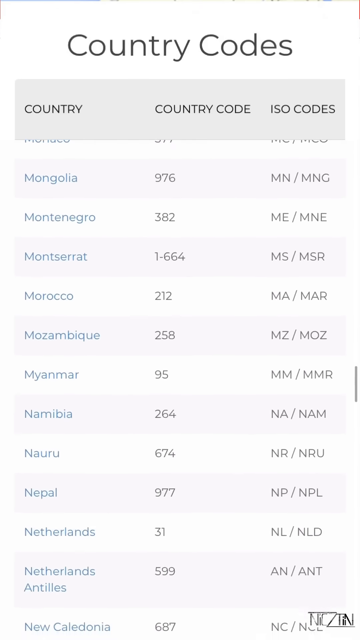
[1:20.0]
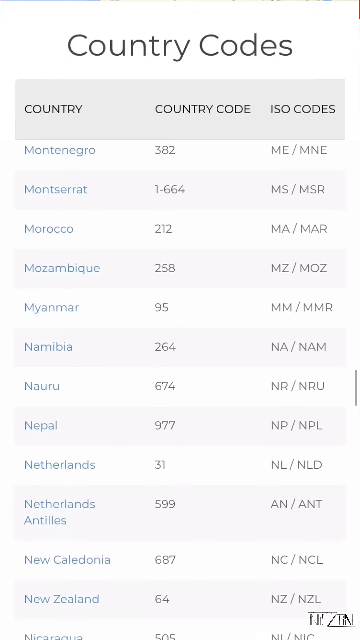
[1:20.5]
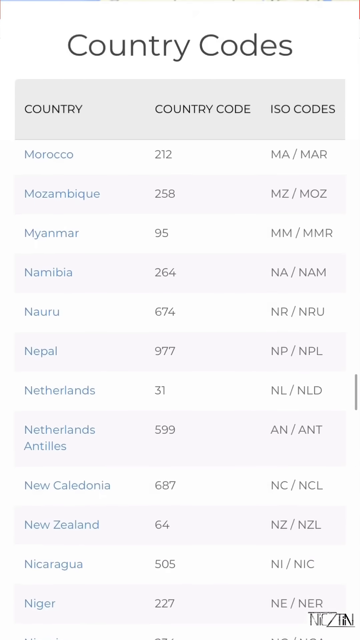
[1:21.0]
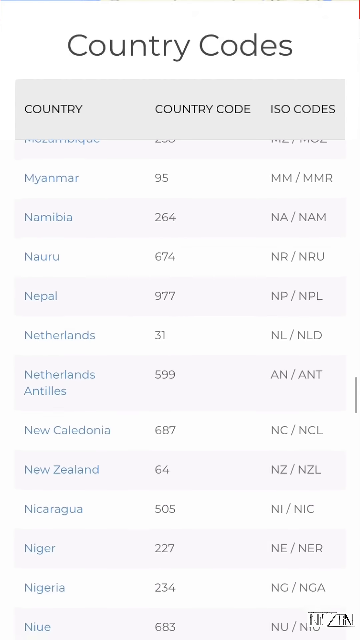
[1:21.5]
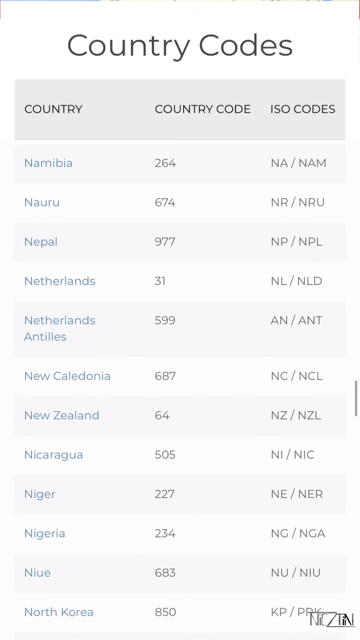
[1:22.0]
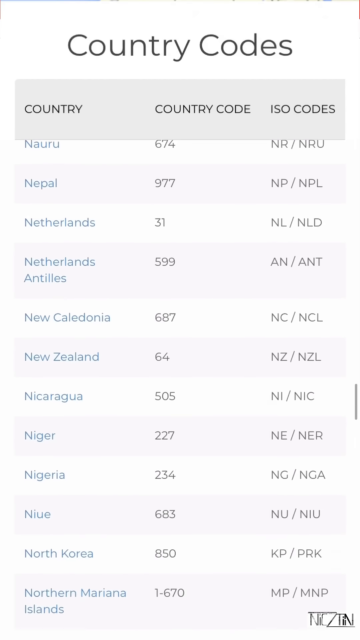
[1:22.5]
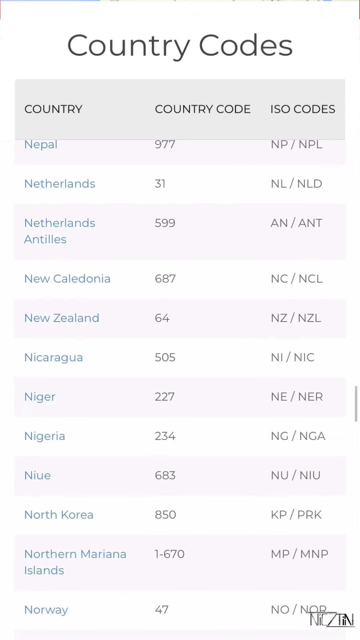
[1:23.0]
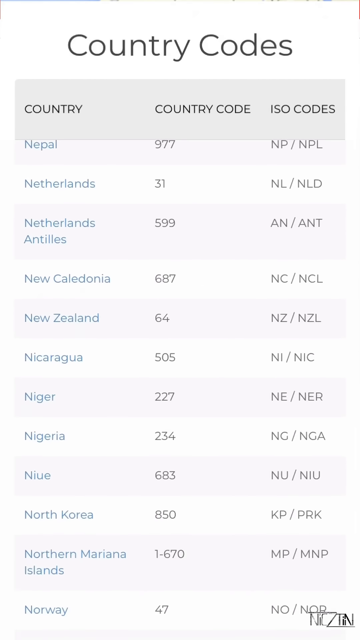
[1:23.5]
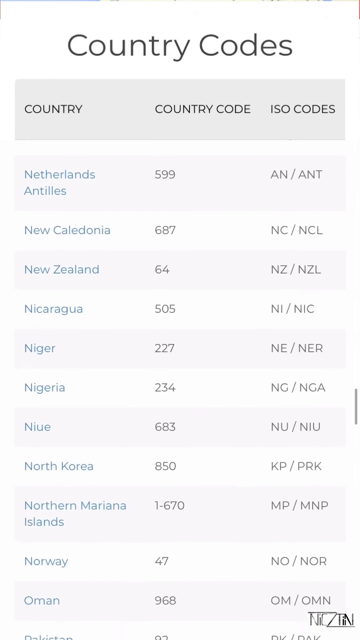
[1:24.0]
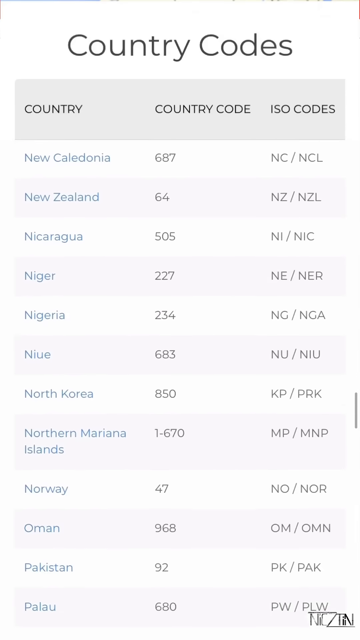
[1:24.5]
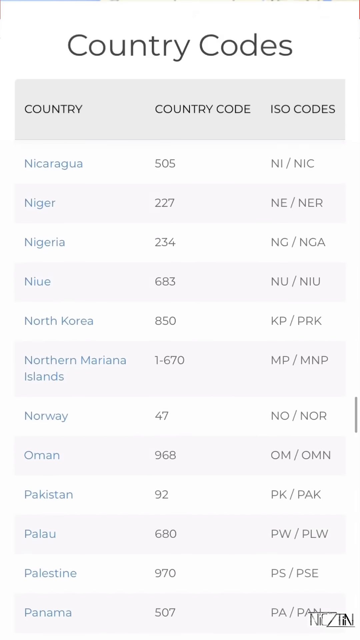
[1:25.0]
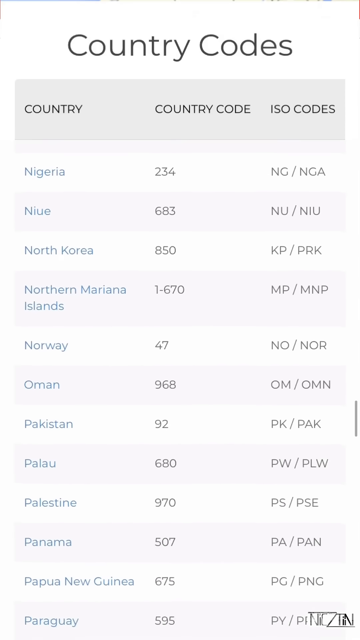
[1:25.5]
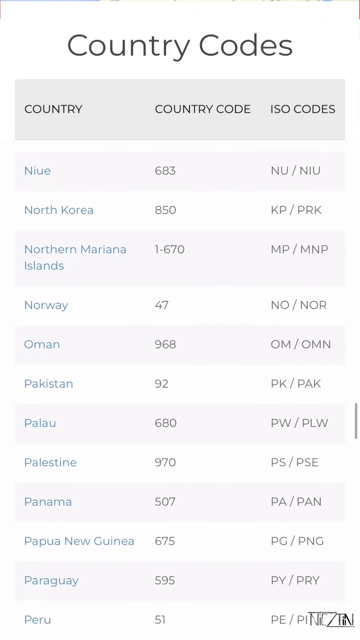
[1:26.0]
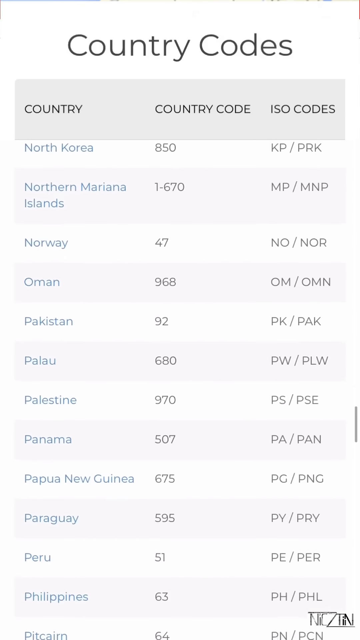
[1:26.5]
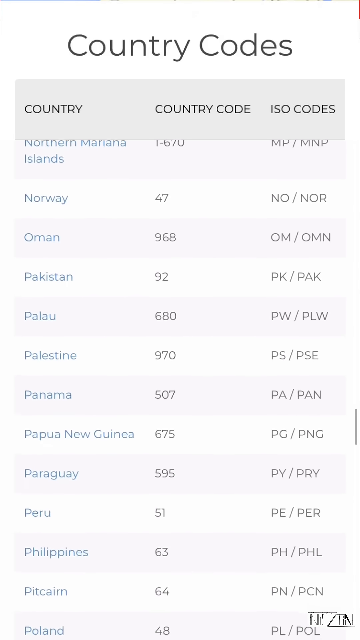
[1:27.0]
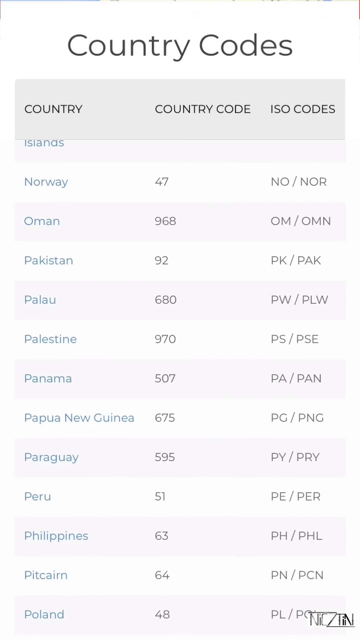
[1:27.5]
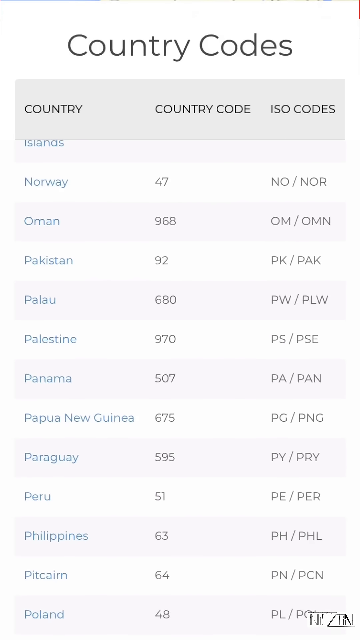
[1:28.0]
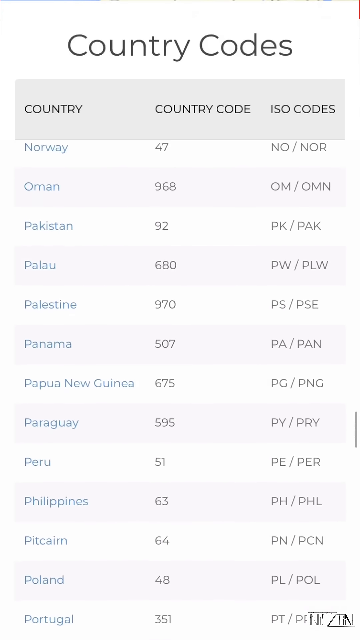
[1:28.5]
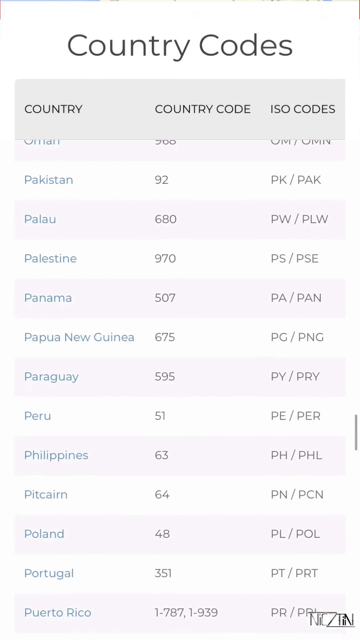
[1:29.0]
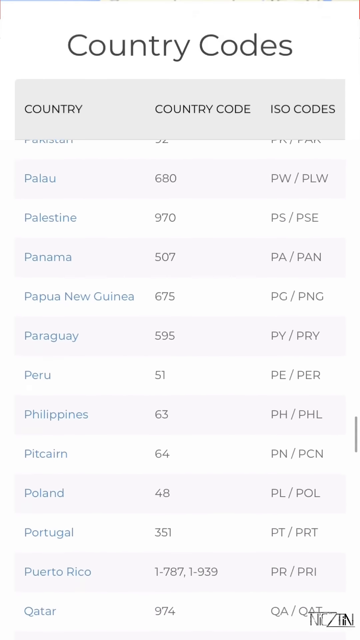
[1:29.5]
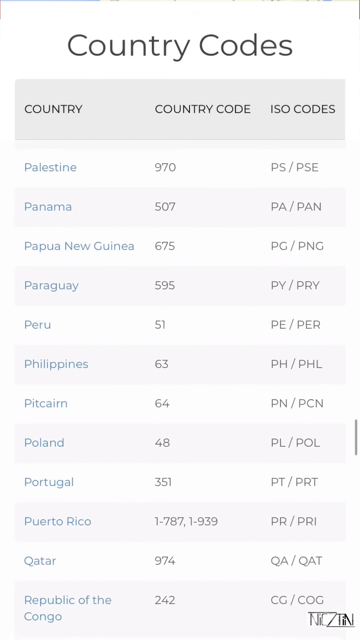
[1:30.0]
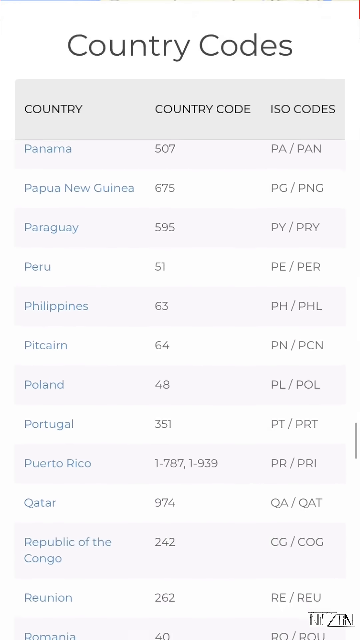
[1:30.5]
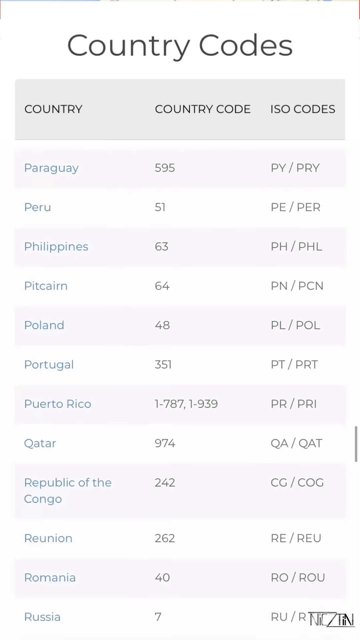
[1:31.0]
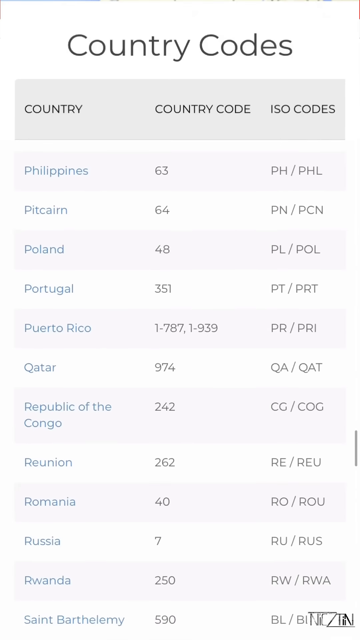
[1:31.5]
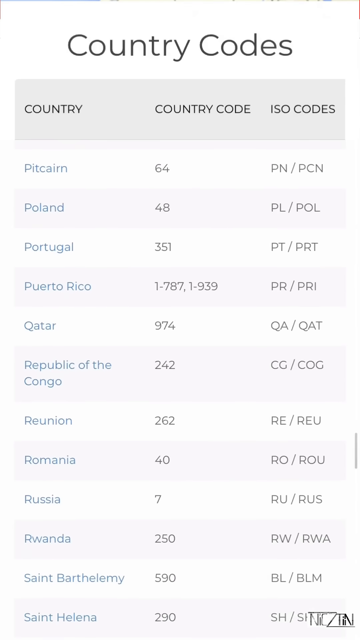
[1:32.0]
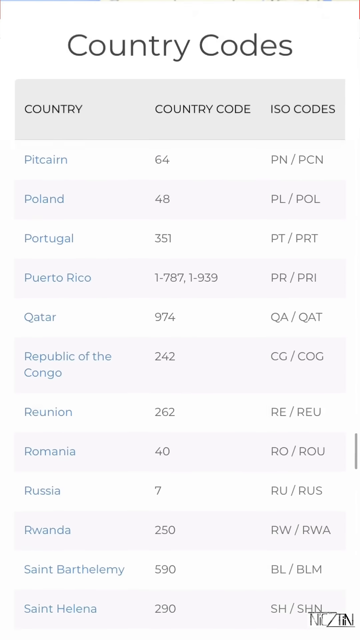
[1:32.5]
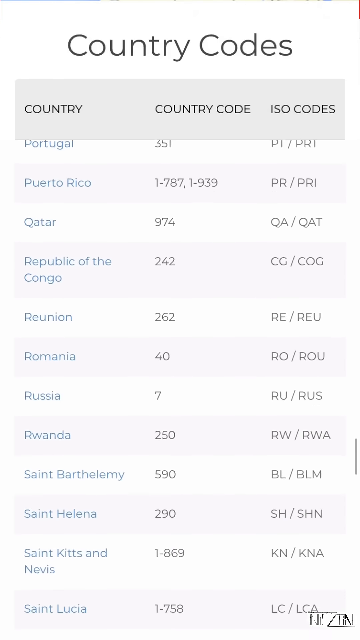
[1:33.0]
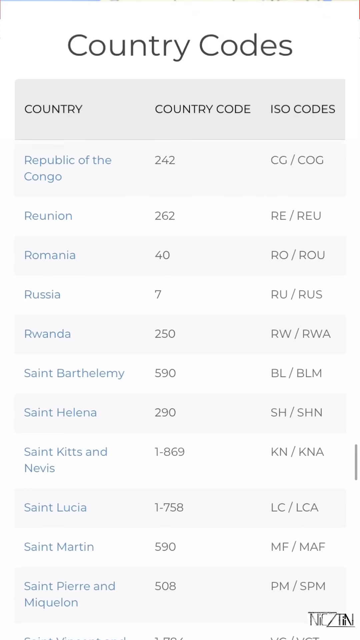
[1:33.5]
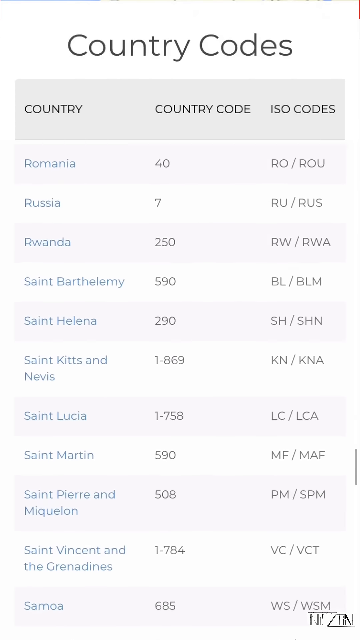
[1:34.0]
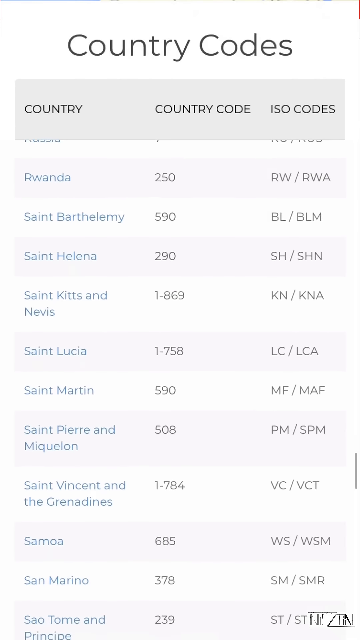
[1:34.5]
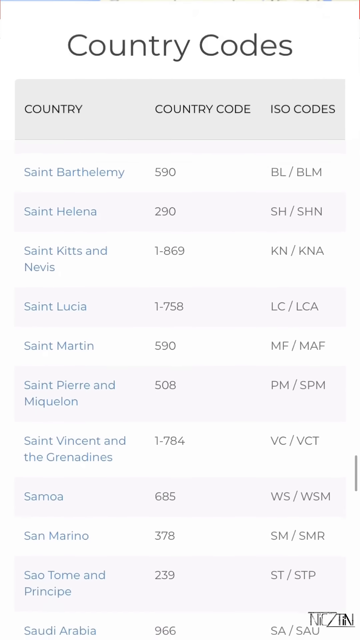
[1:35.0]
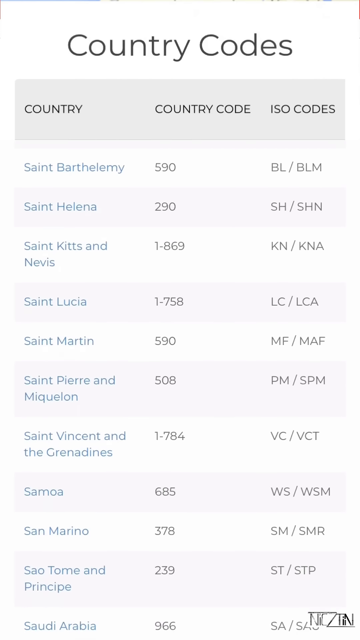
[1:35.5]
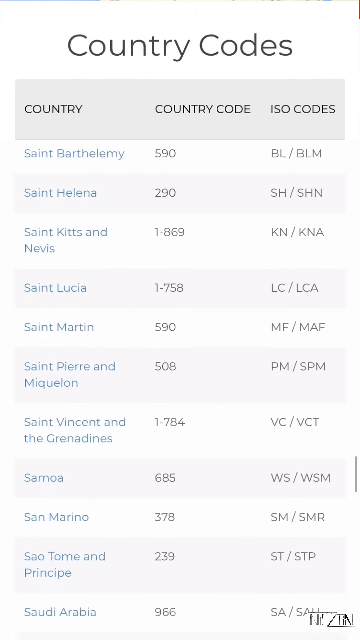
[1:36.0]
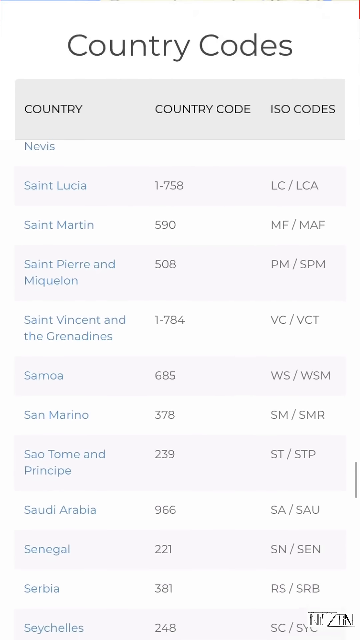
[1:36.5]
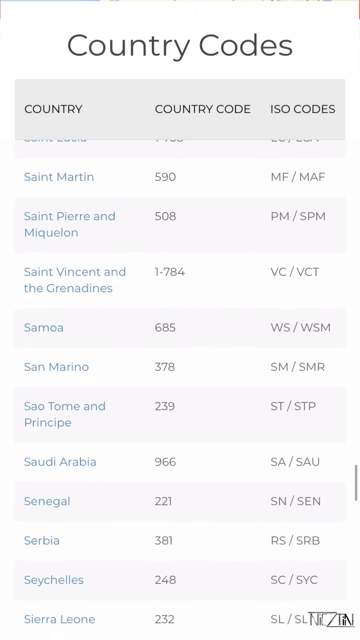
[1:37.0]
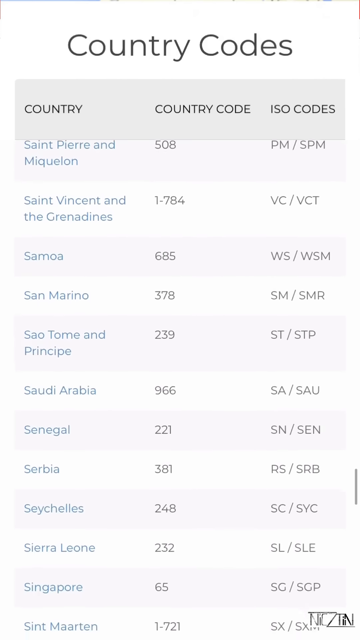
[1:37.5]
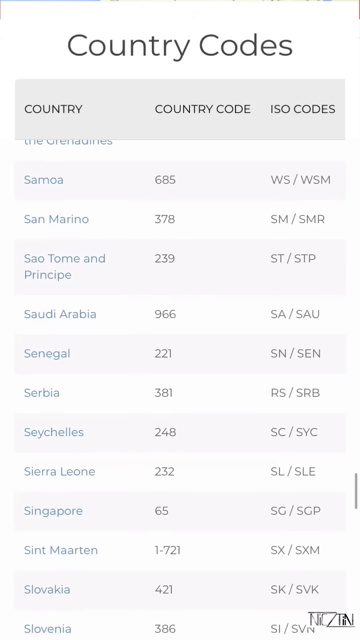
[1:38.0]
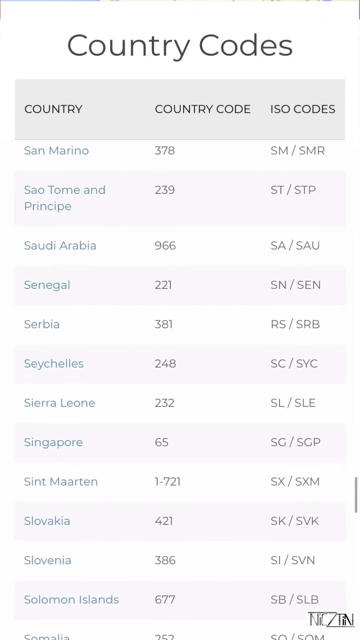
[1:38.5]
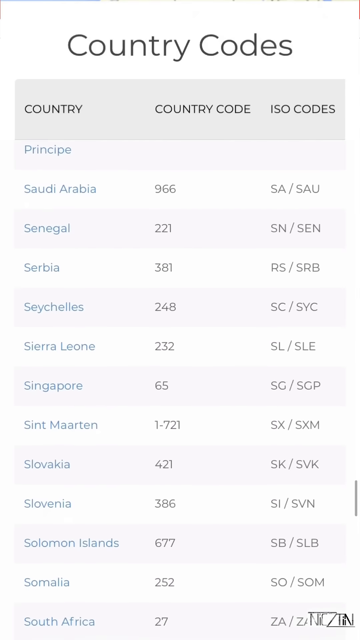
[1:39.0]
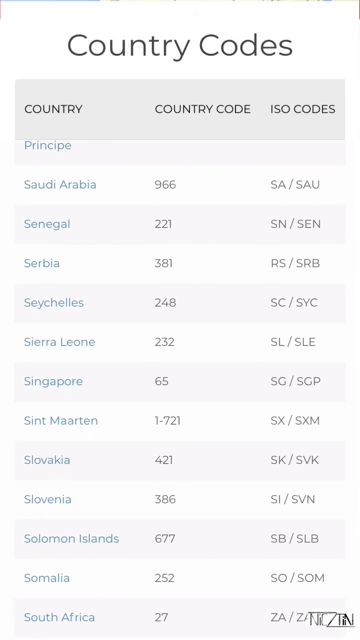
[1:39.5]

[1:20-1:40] "Country codes" is at the top, with the headings "country," "country code," and "ISO code." The list scrolls for a while, pauses, then scrolls again, moving from the M's, starting with Mongolia, through the N's, with Nigeria, then Oman, and the P's, including Pakistan, Palau, Palestine, Panama, Poland, and Portugal. There is only one Q, then a few R's, including Russia, followed by many S's, including St. Kitts and St. Lucia. Each row lists the name of the country, a two- or three-digit code, and letters in the form of two letters slash three letters, for example "RS/SRB."